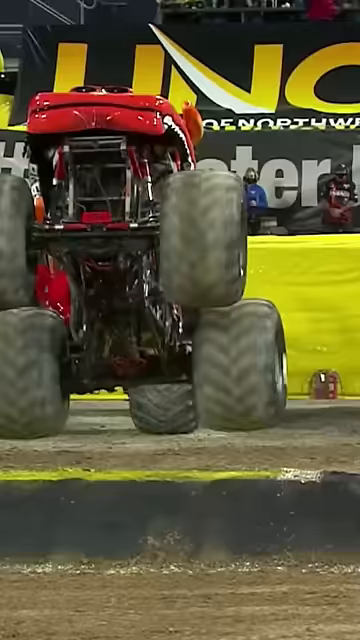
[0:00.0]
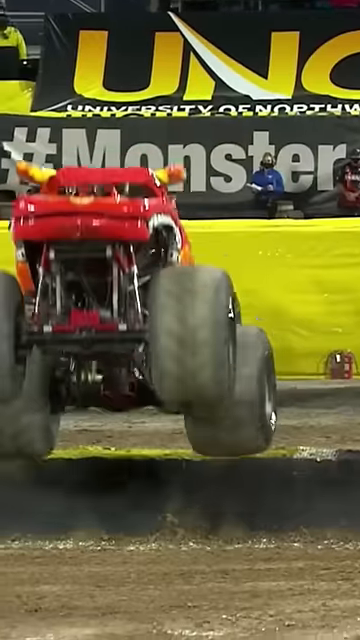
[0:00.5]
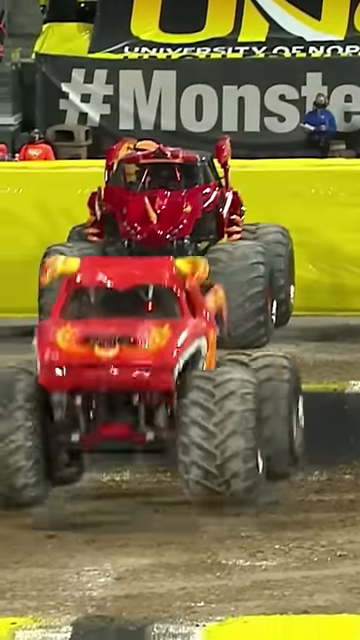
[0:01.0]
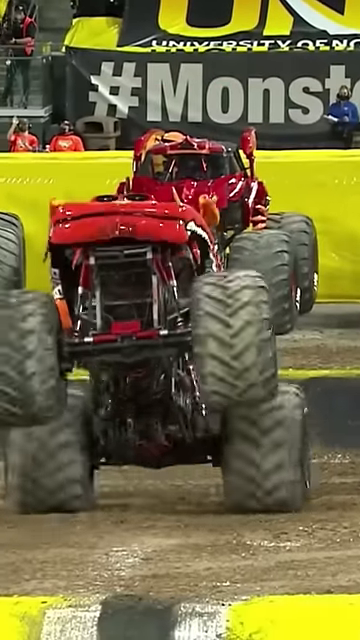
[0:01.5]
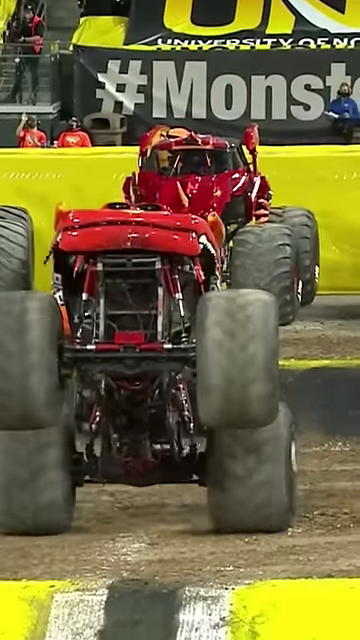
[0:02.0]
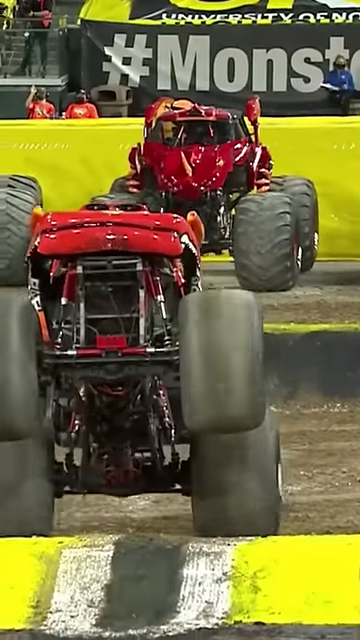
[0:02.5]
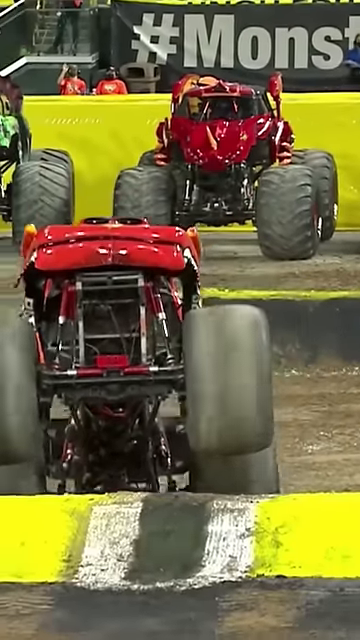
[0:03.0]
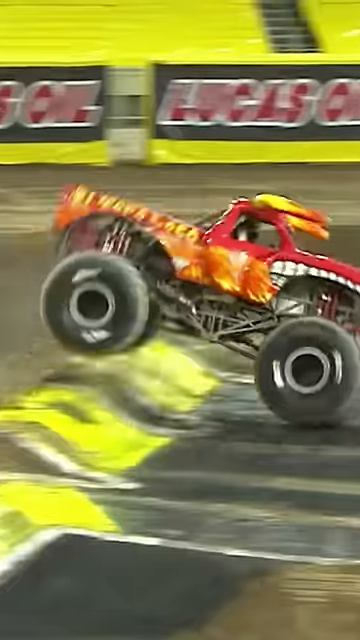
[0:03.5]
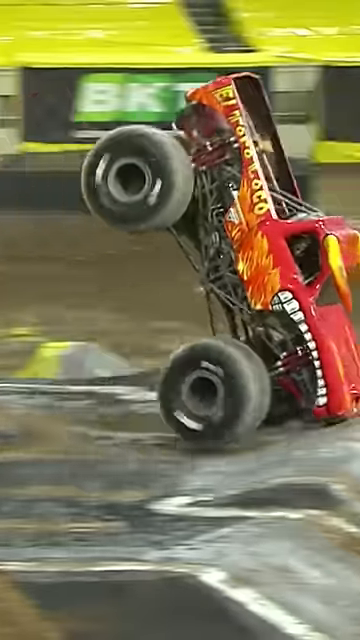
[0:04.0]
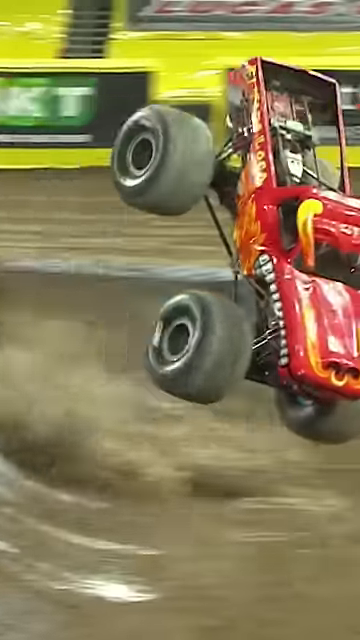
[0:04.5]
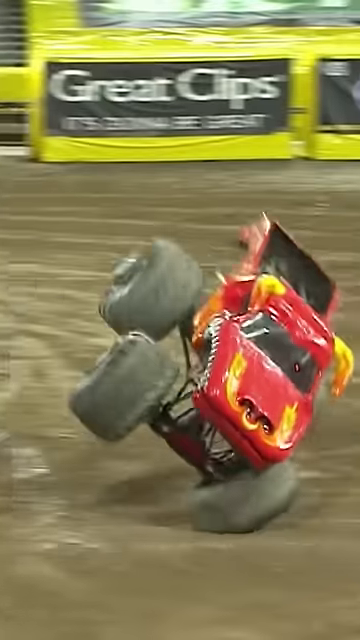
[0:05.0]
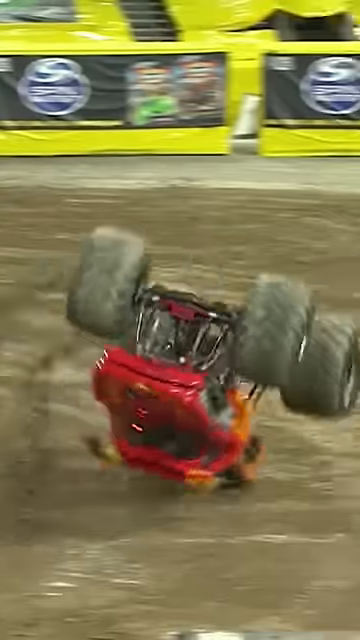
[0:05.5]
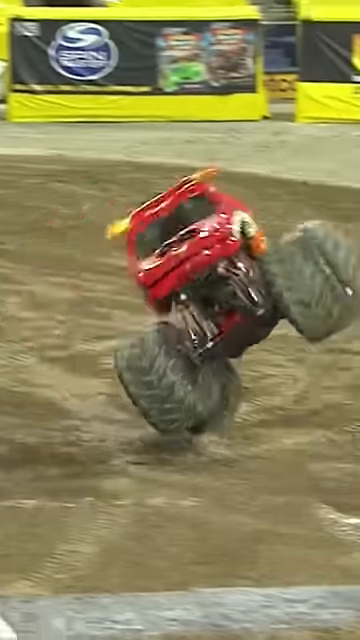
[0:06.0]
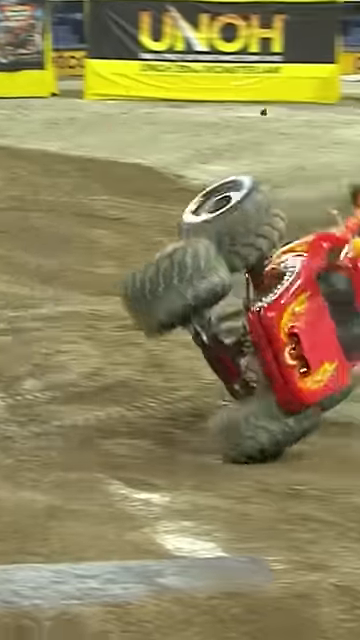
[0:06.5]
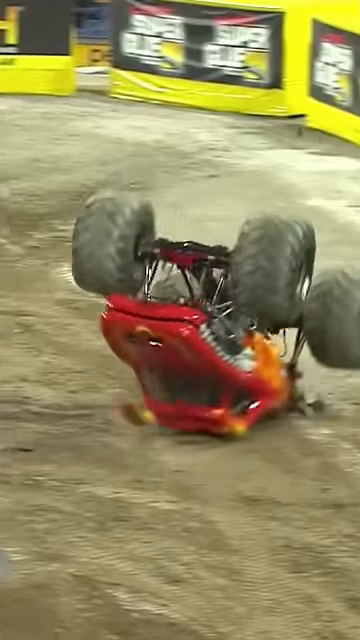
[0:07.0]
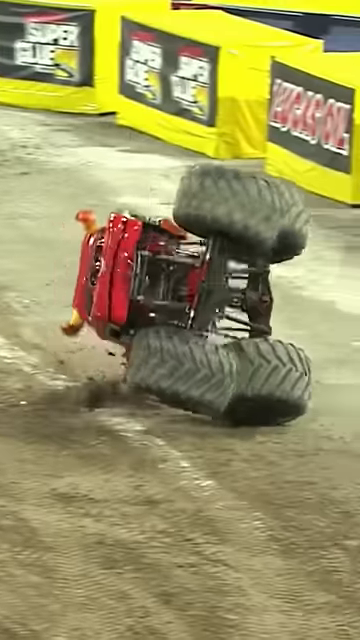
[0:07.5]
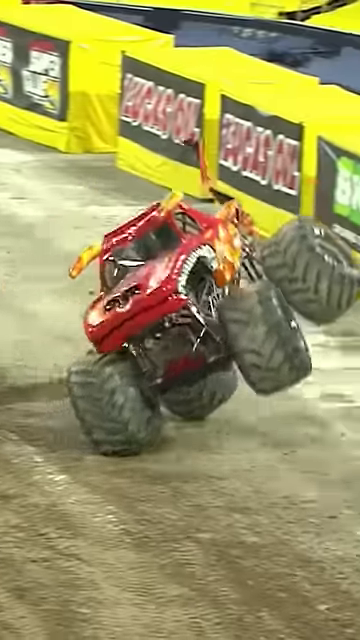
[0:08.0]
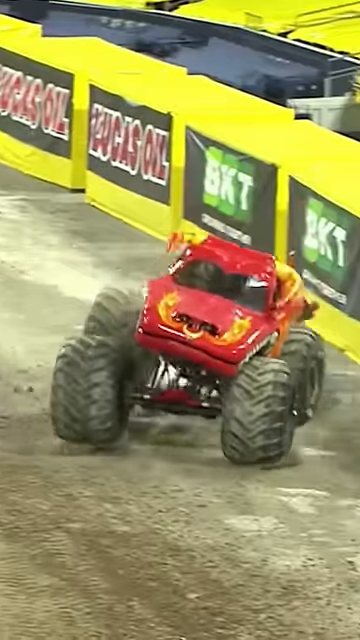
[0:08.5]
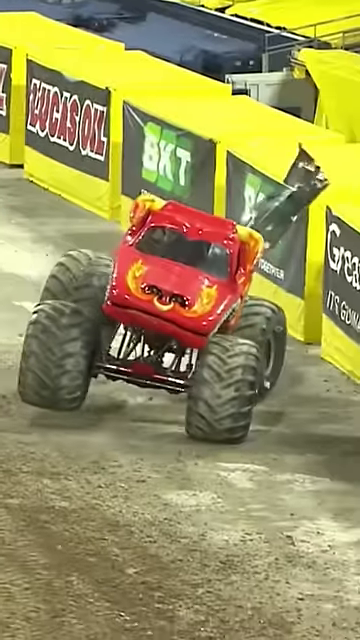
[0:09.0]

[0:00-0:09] A monster truck performs in an arena. The truck is red and lifted up on giant tires, with a black undercarriage and yellow horns; it looks like it has teats painted kind of around the wheel wells. The yellow horns look like longhorn horns coming out of the cab, so the truck is made to look like a mean bull, and there is something like a blower out of the hood. The truck does wheelies, at times goes up on its nose, and turns over like somersaults. It spins on its back wheels again, then turns over and over, landing on its hood. Often it runs on only two wheels, either the front or the back wheels, and sometimes it turns end over end or rolls over and over from the side. In the background there is kind of a yellow wall around the arena. Some people are in the stands, and there appear to be officials judging the event. The dirt floor has some bumps for the truck to run over.